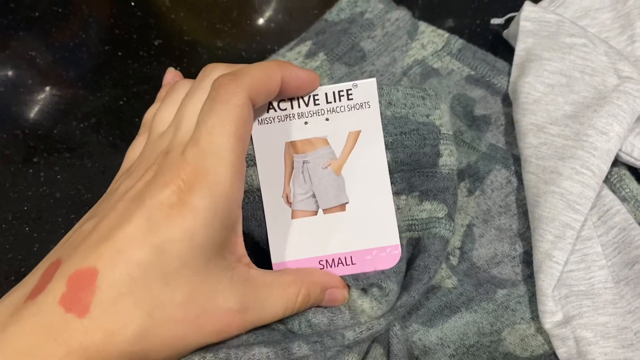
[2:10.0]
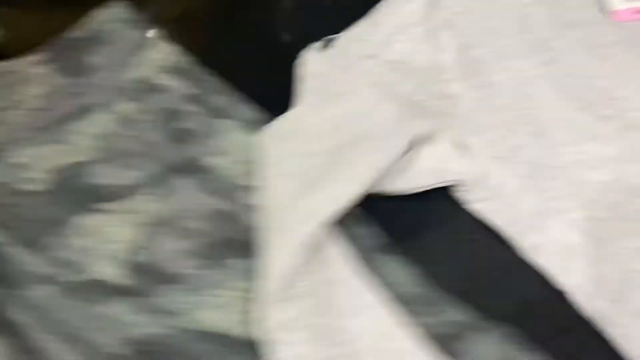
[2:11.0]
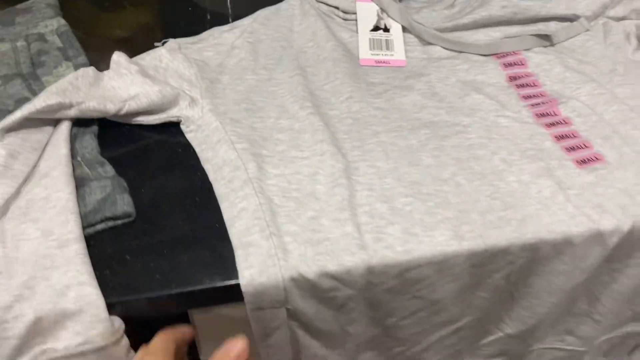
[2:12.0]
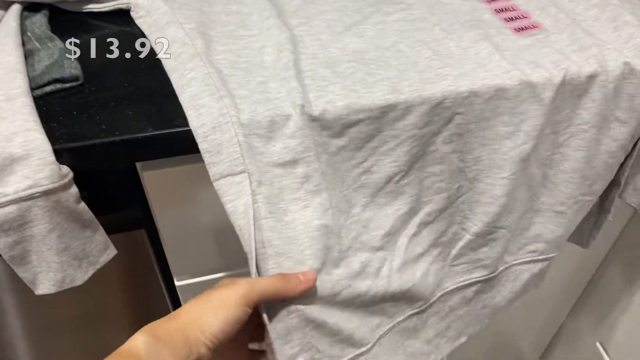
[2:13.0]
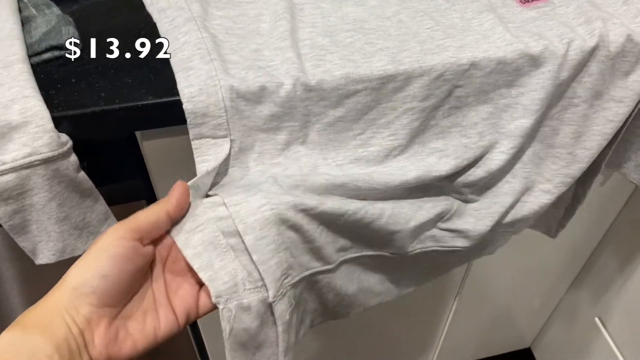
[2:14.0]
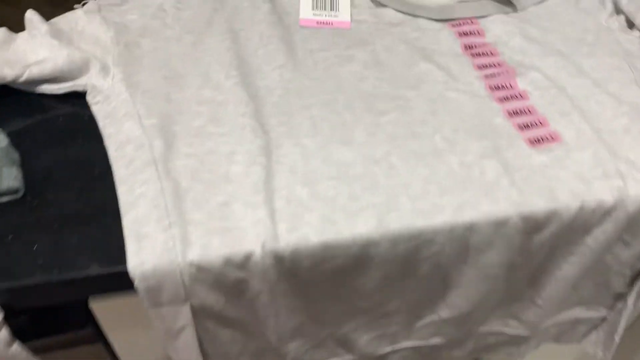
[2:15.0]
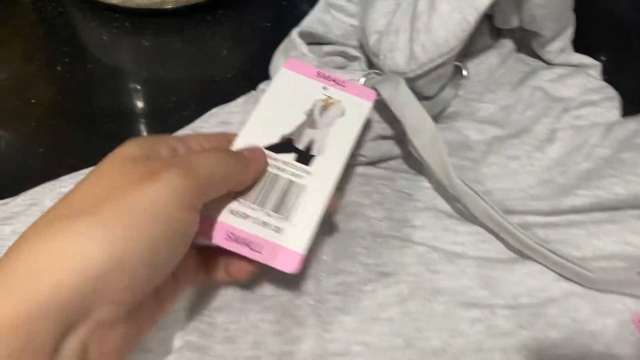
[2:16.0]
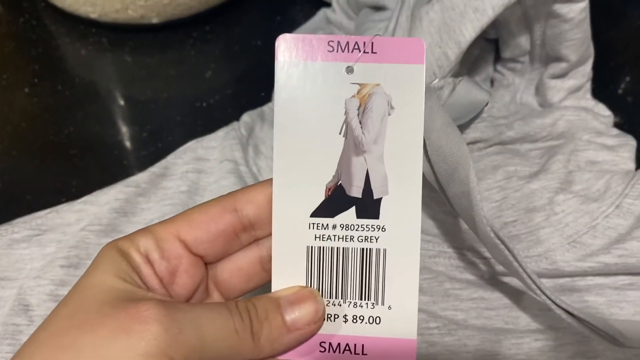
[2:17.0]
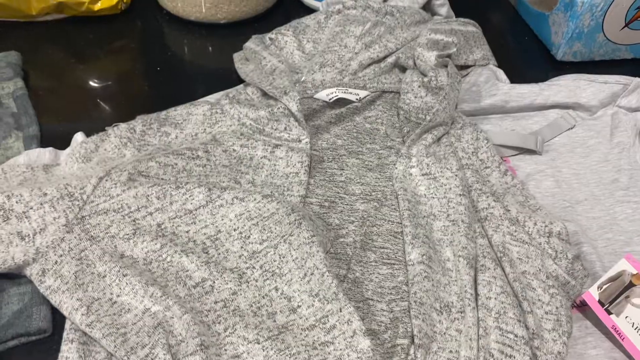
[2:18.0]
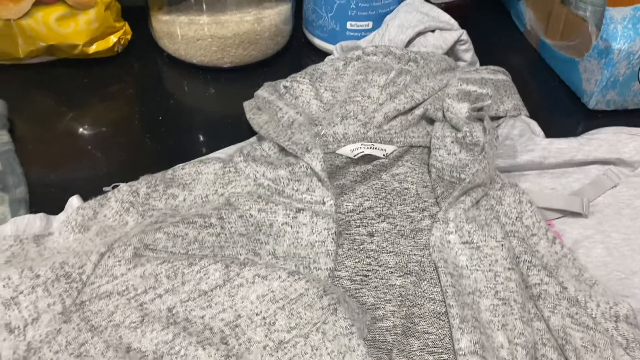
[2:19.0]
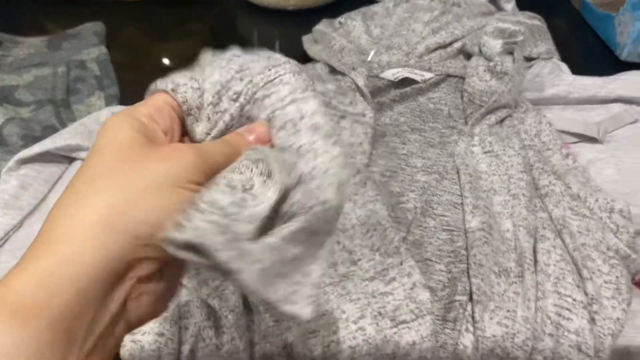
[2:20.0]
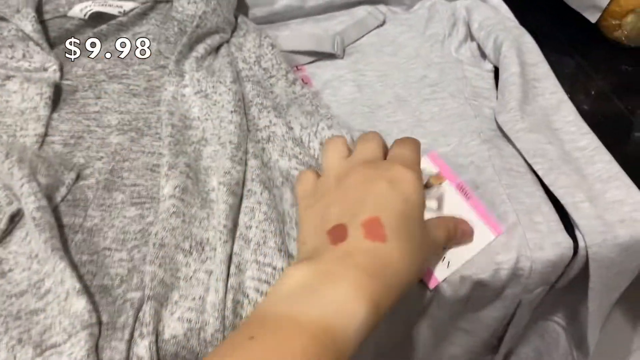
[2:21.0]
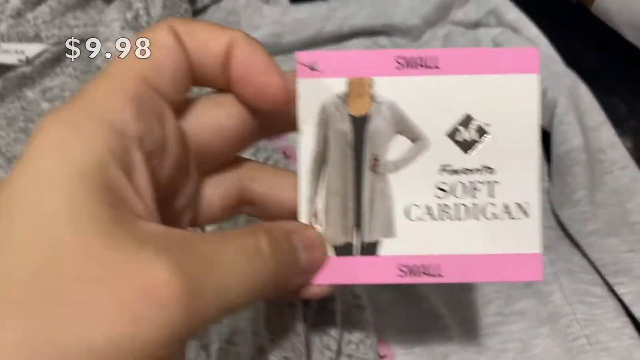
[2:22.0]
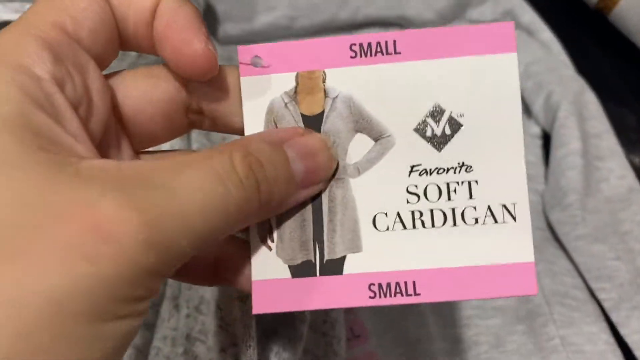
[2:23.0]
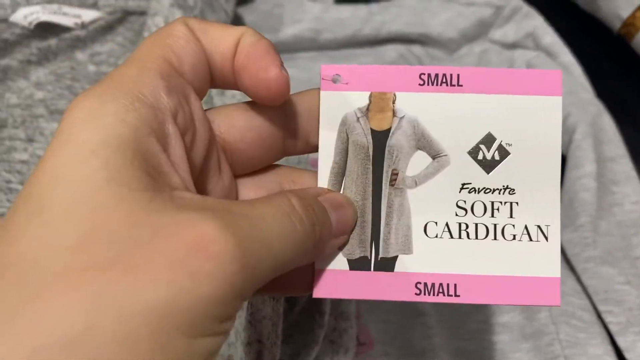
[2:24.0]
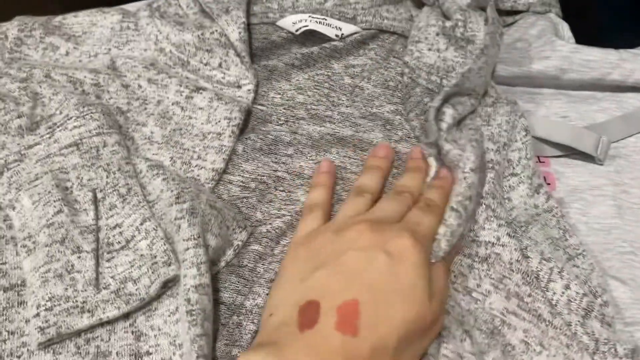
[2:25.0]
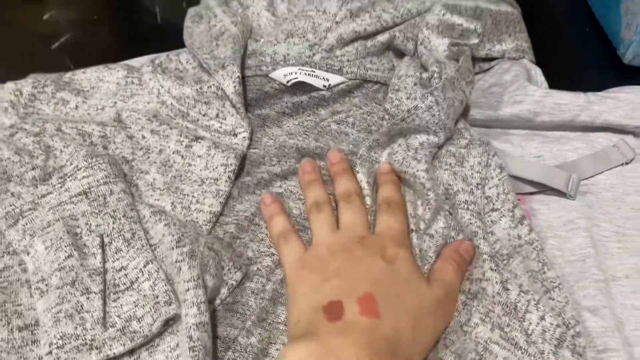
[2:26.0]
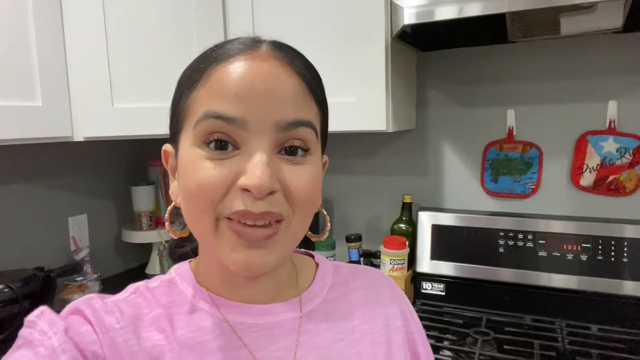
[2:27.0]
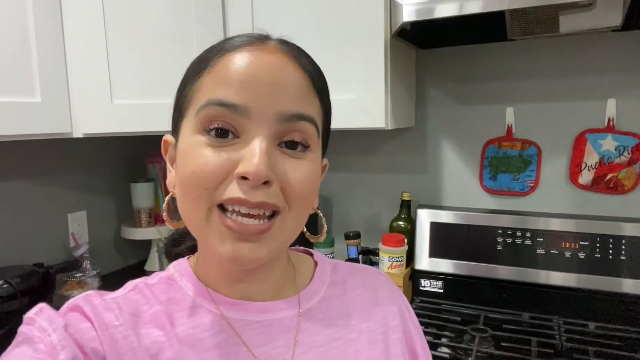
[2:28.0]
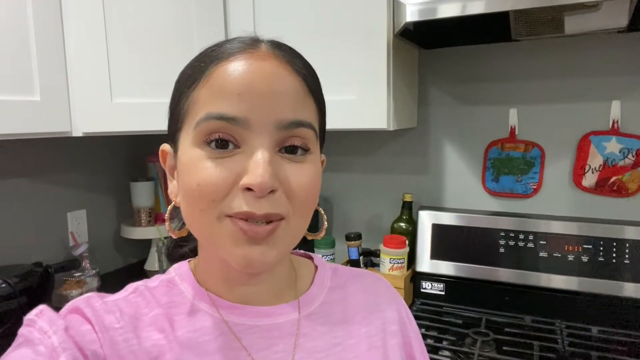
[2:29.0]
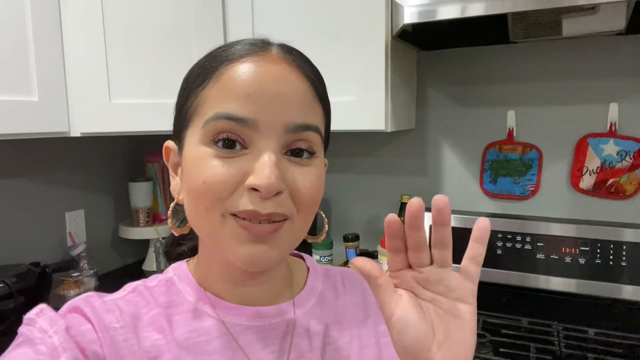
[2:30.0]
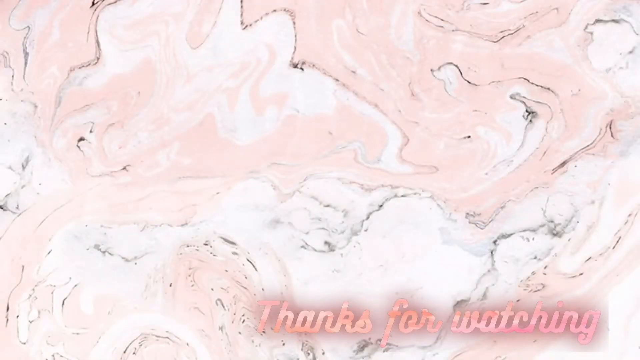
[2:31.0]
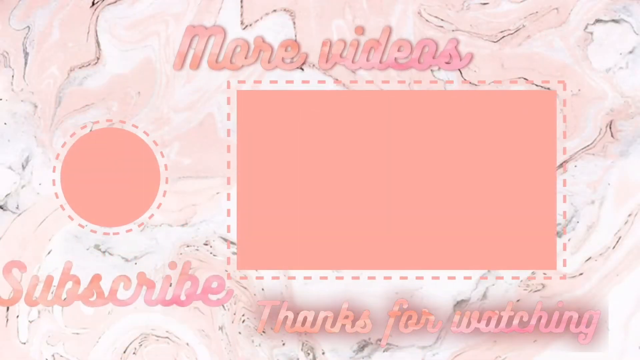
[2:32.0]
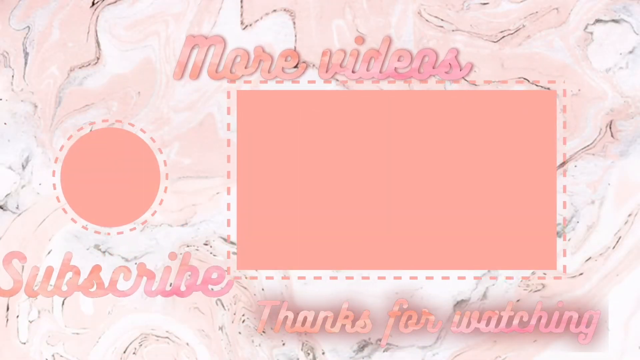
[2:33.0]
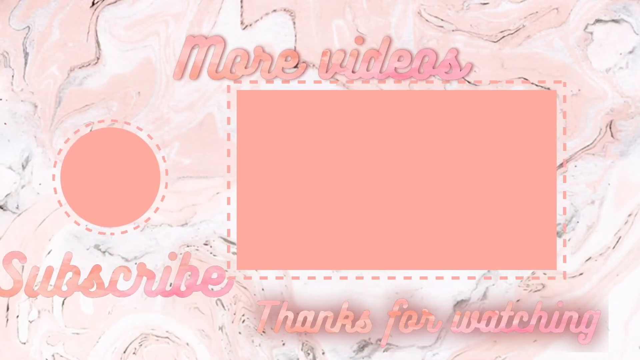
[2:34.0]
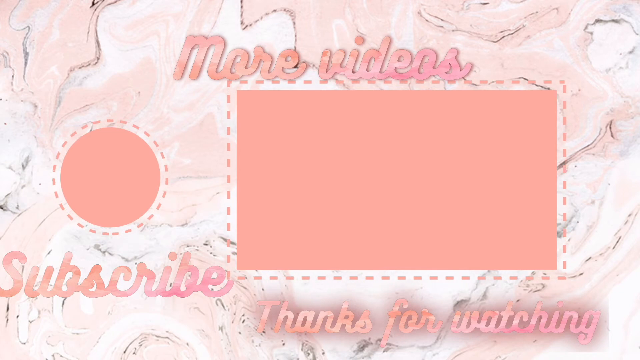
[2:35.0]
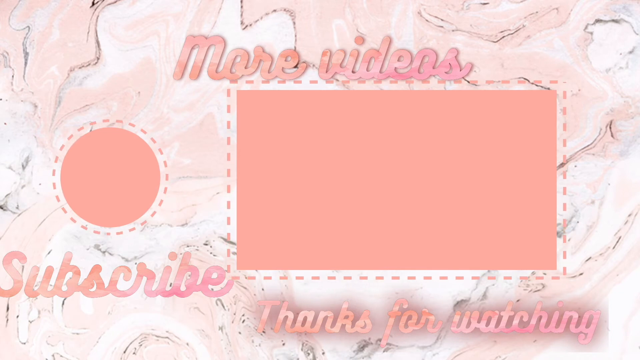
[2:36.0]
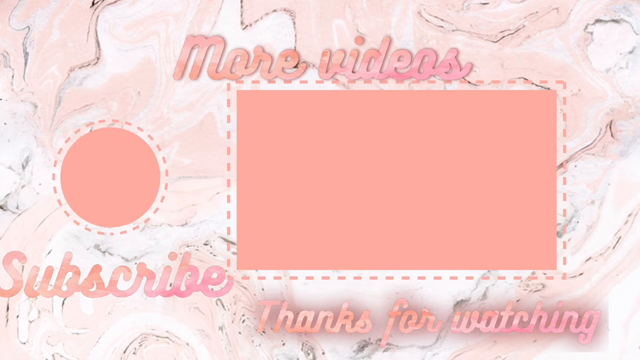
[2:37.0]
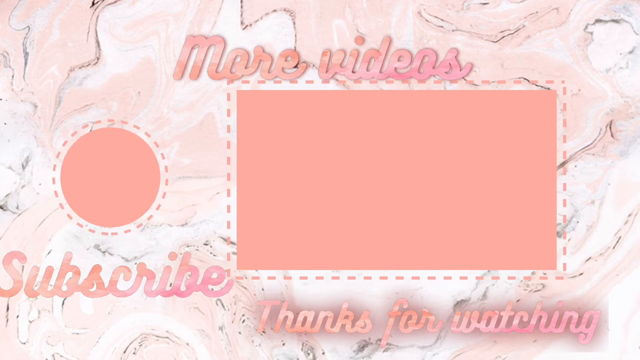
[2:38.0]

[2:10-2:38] A close-up shows some shorts, with the person's left hand holding the label between the thumb and the middle and index fingers; the label is laying down flat. The item is a size small, and the label is still attached. The person slightly lifts it toward the camera before quickly panning the camera to the right, where there is a heather gray shirt. The camera pans down to where the front of the shirt is hanging over the front of the counter, and the person picks up the bottom left side of the shirt. A pricing label appears in white text in the upper left corner of the screen that says "$13.92." The person feels the fabric with the left hand, then drops the shirt corner and it falls back to the counter. The camera pans up to the front of the shirt near the neck area, and the person grabs the label with the left hand and holds it close to the camera so the pricing and details on the label can be seen.